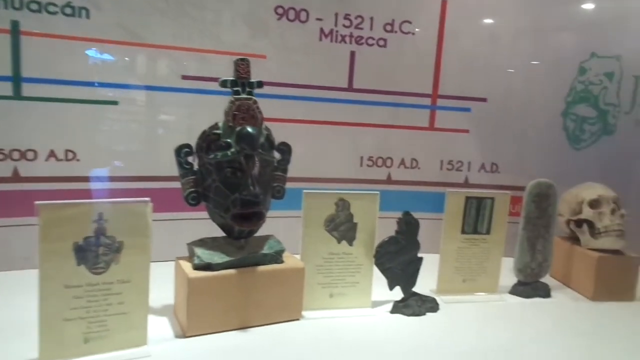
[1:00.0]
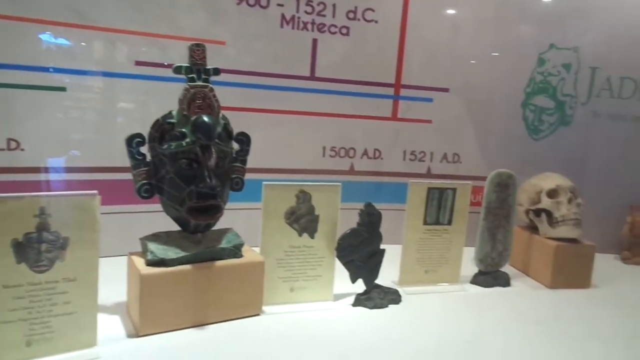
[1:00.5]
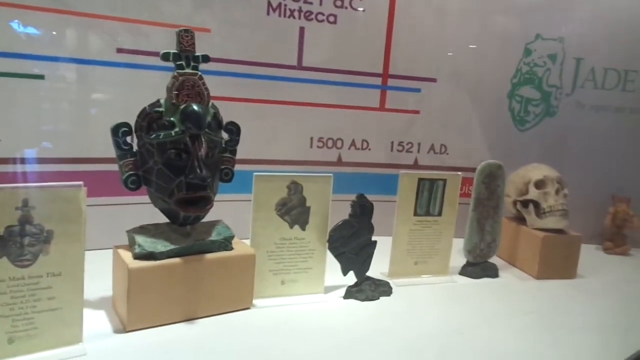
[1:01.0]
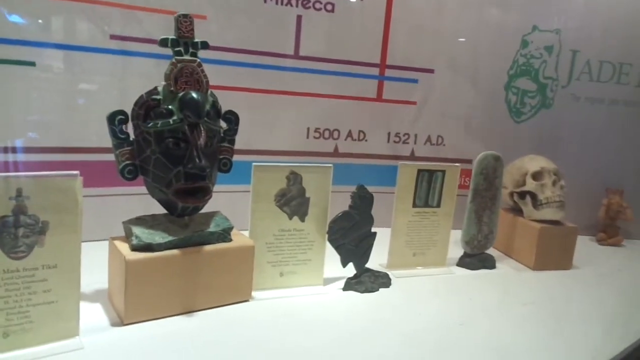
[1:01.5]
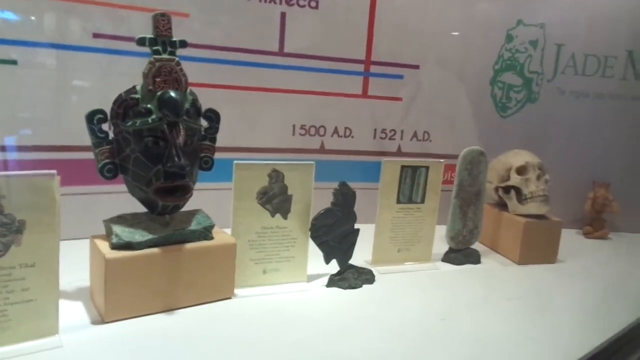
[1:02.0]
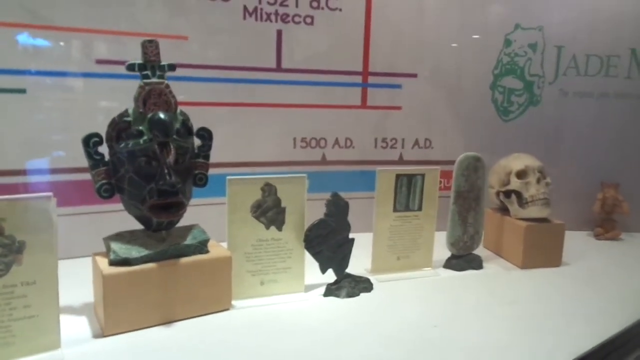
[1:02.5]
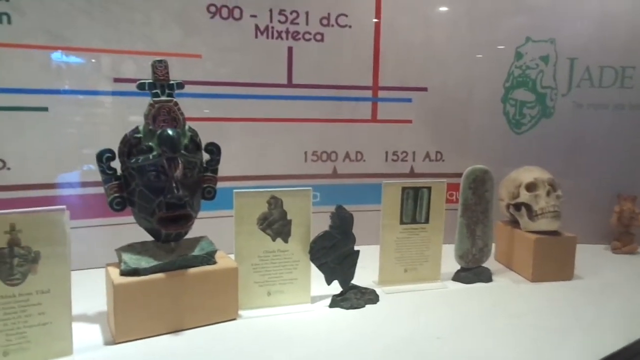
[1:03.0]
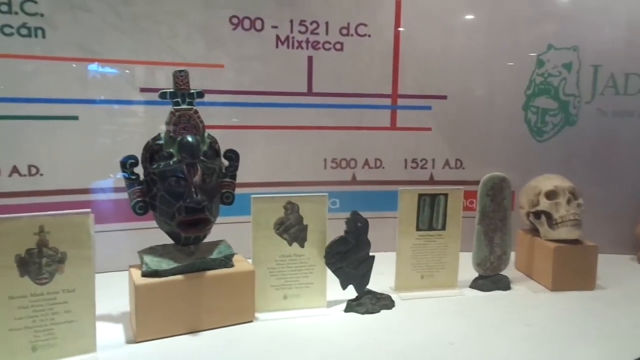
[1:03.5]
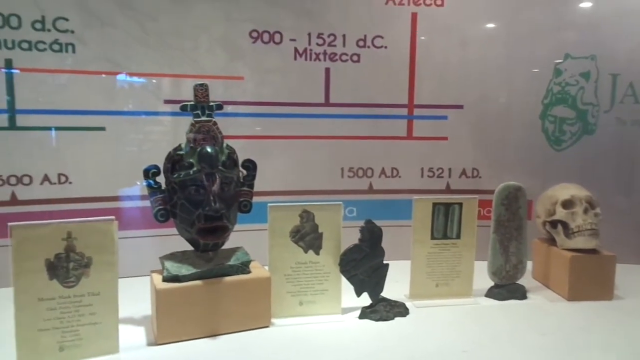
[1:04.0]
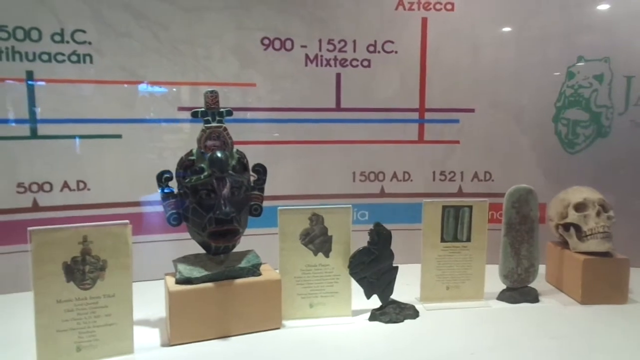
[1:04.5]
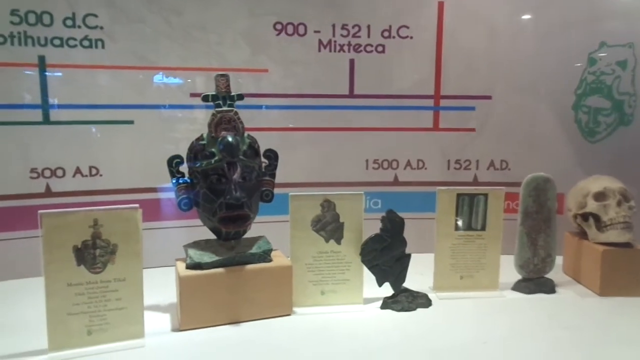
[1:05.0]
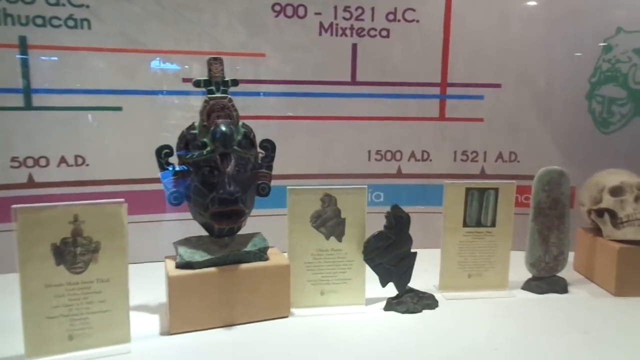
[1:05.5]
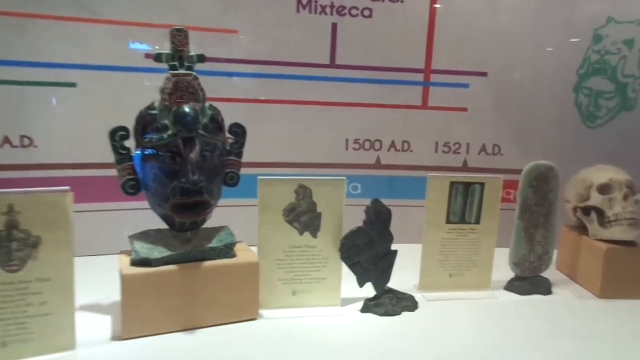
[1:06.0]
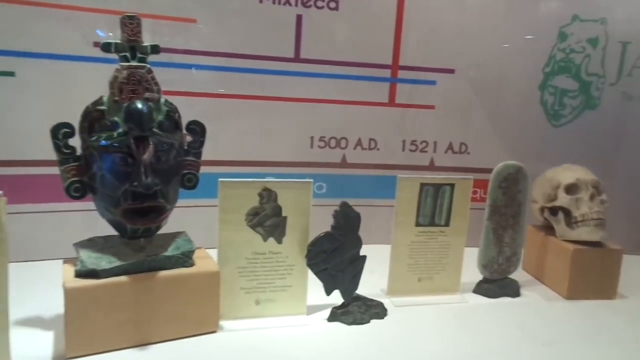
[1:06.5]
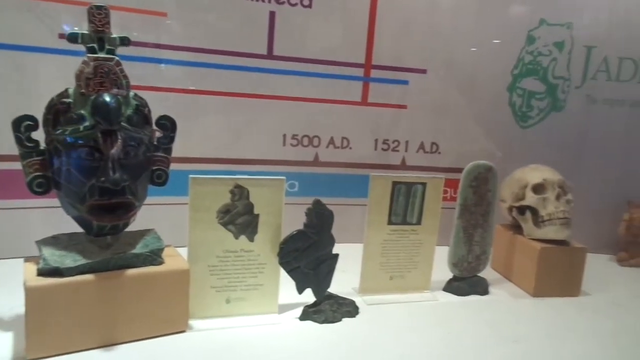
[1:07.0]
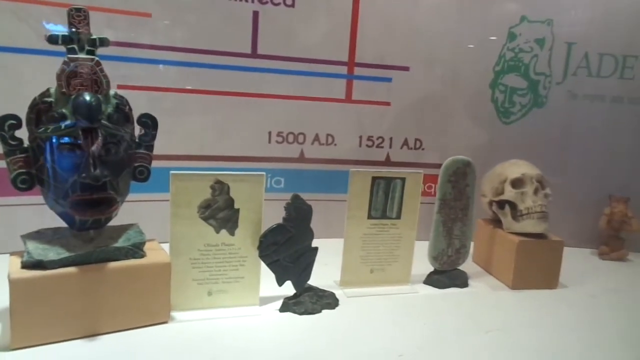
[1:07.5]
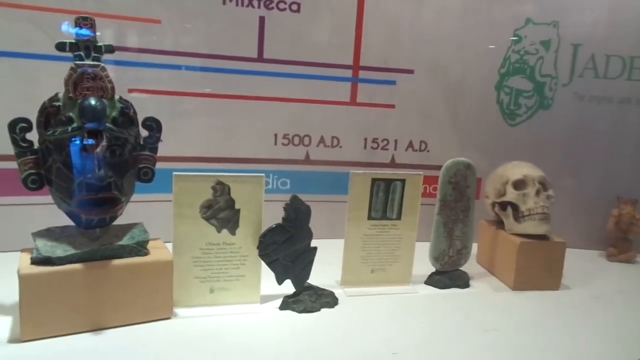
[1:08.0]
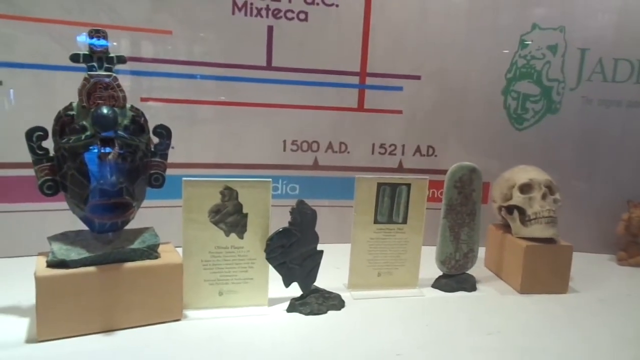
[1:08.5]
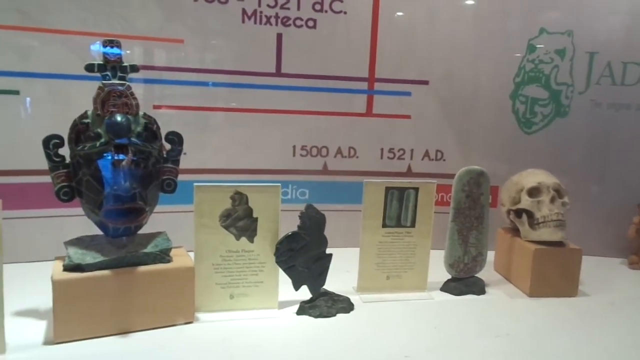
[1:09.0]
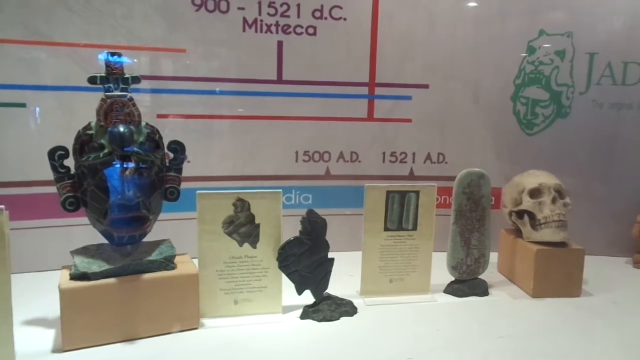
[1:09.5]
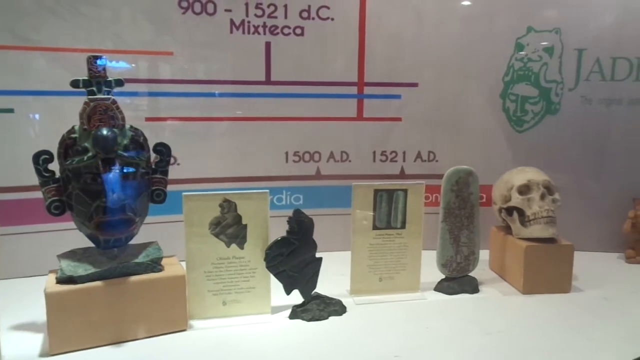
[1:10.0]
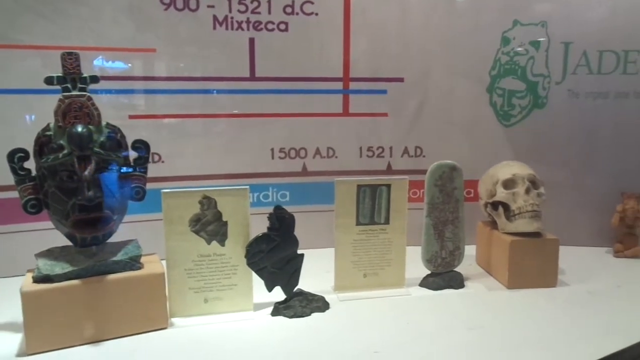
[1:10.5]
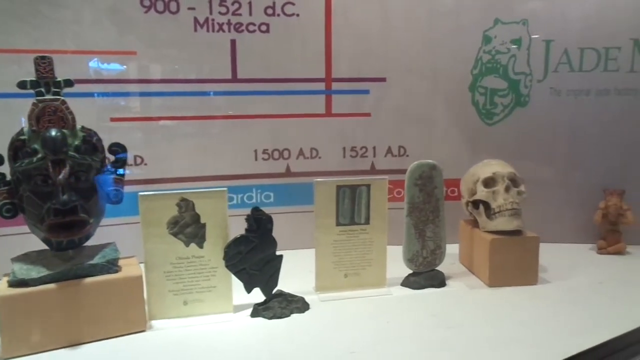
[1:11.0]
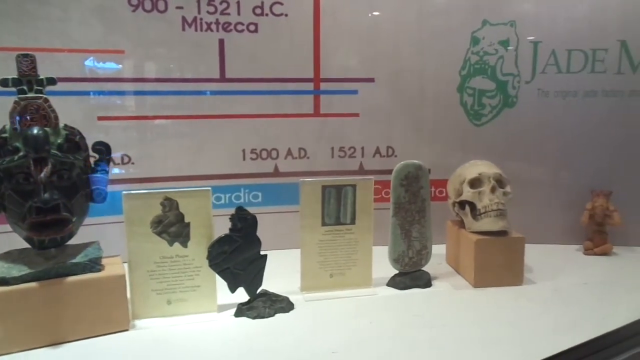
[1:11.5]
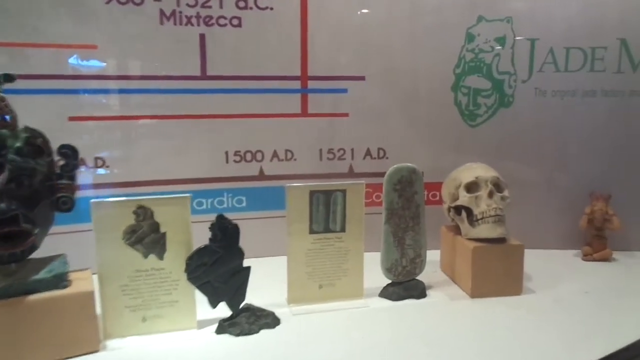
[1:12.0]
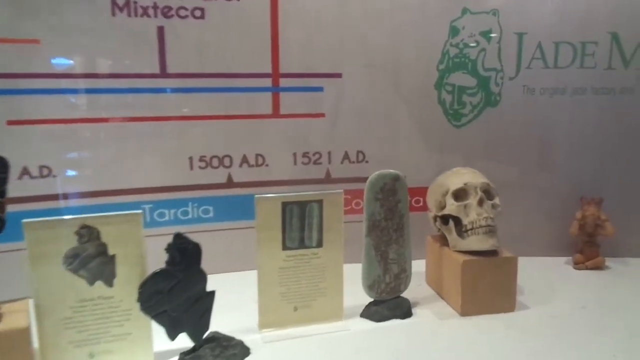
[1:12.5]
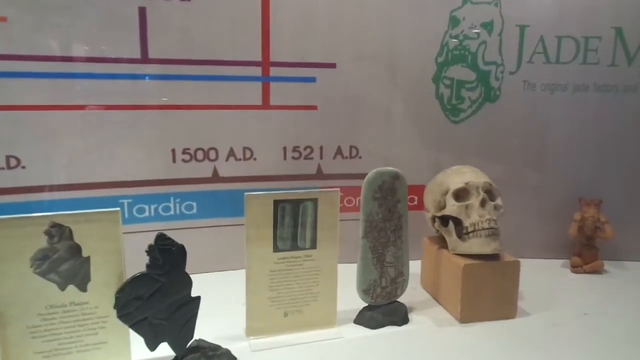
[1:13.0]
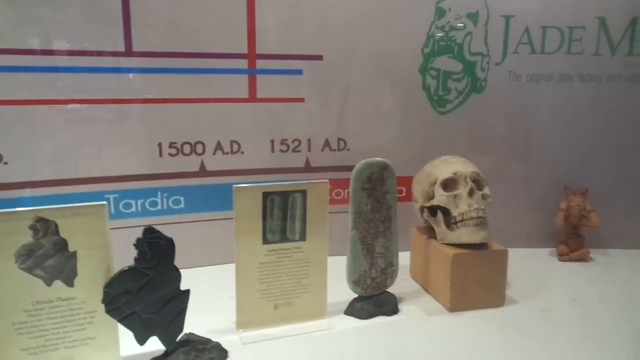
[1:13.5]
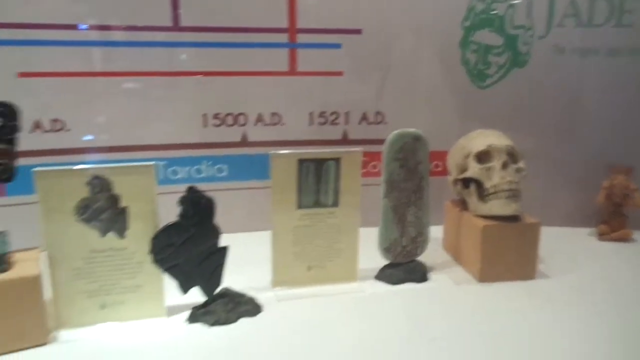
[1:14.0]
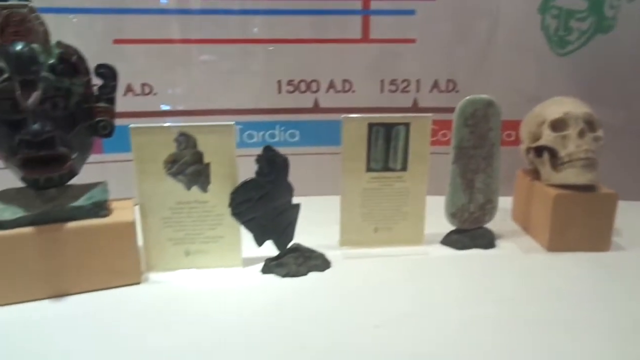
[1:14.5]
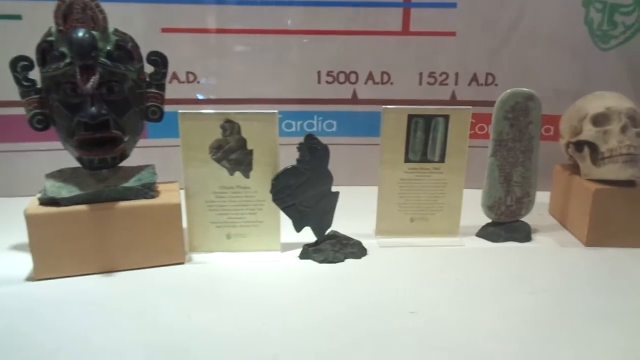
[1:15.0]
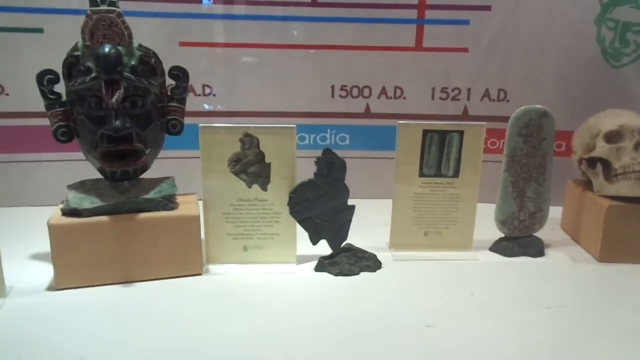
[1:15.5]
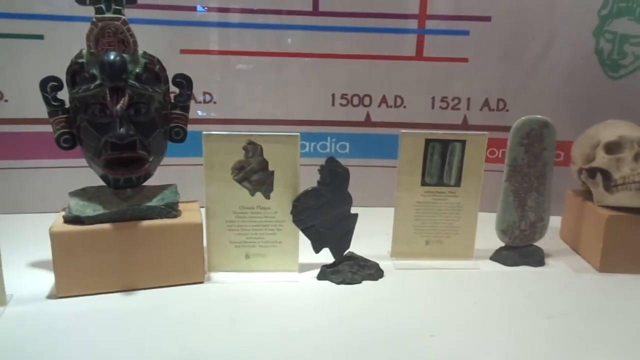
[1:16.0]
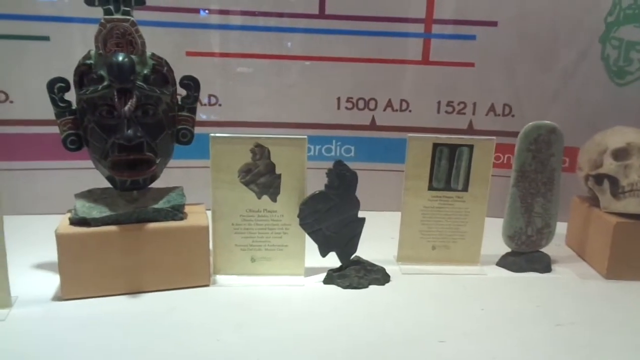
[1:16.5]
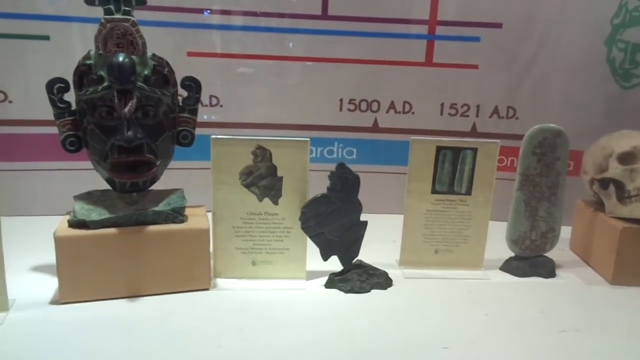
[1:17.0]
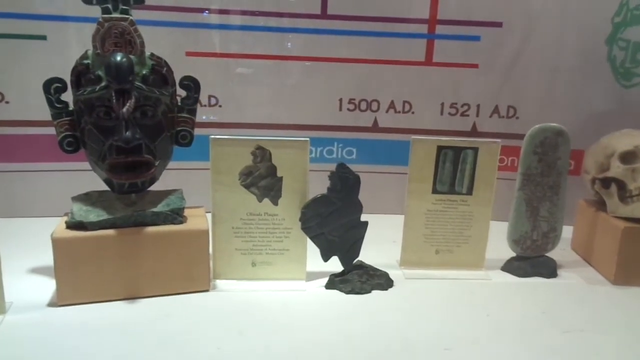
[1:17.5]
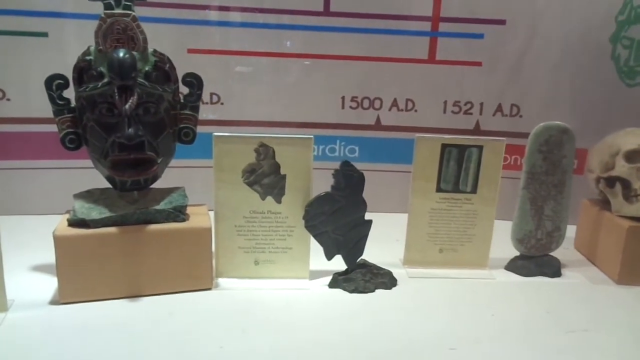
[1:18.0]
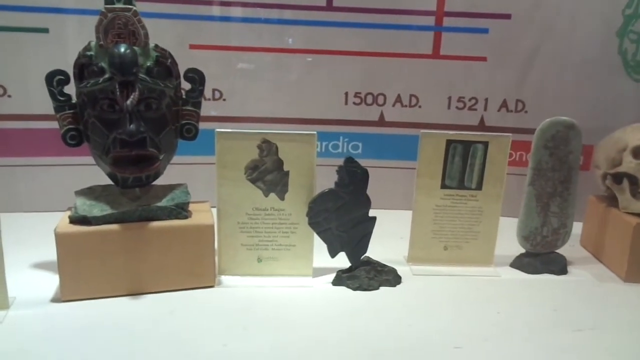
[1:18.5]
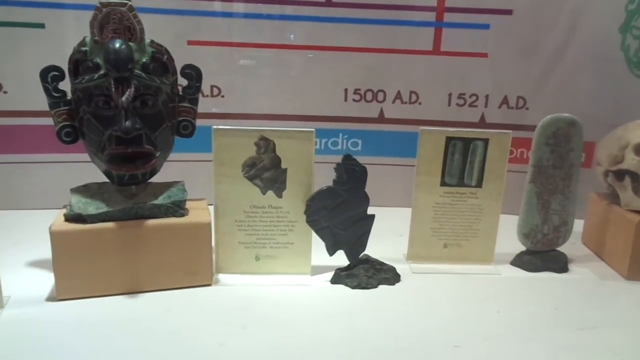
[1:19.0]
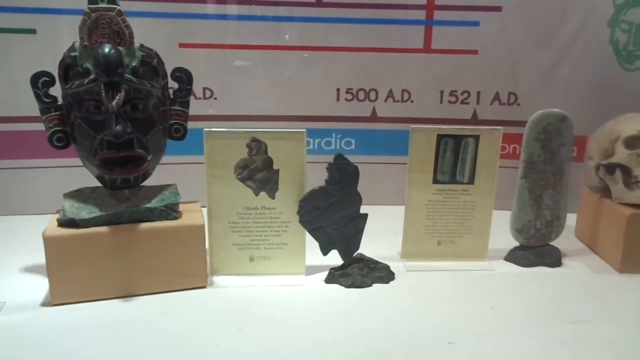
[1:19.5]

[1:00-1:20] The head figurines are shown, and to the far right is a skull, probably a real human skull. The dates "1500 AD" and "1521 AD" are visible. The figures might be Neanderthal-like. The wall behind the displays has markings in red, purple, orange, blue and green, including a green drawing of a woman with what almost looks like a skull on top of her head. The camera pans as a person explains things and sort of points toward the skull, and the camera glimpses some sort of figurine to the far, far right. At the top is "900 to 1500" and the word "mixteca," spelled M-I-X-T-E-C-A. The focus seems to move toward the human skull.